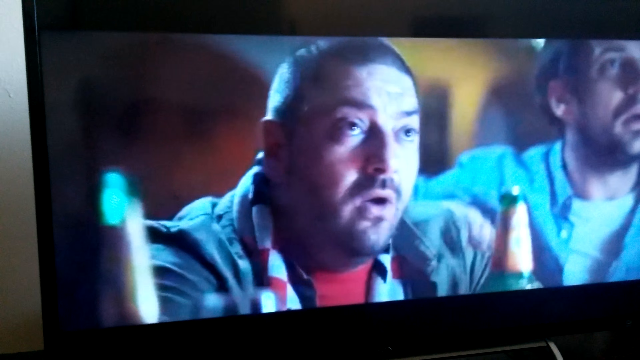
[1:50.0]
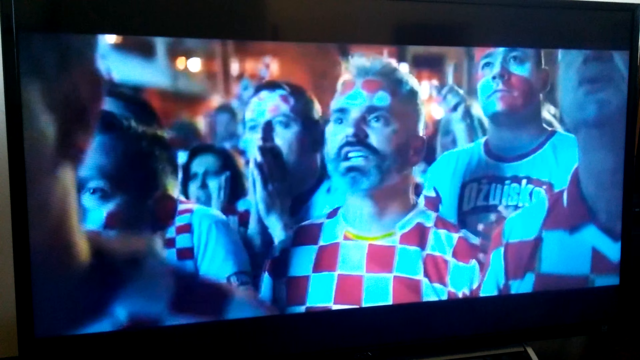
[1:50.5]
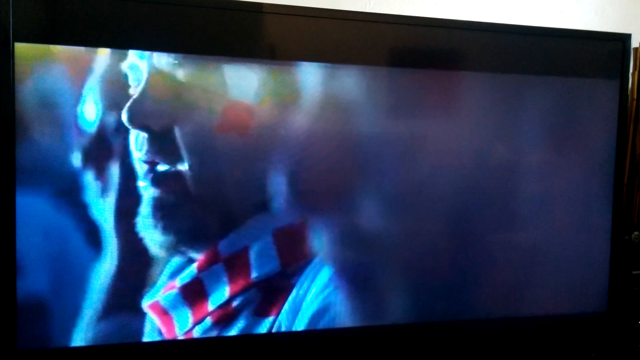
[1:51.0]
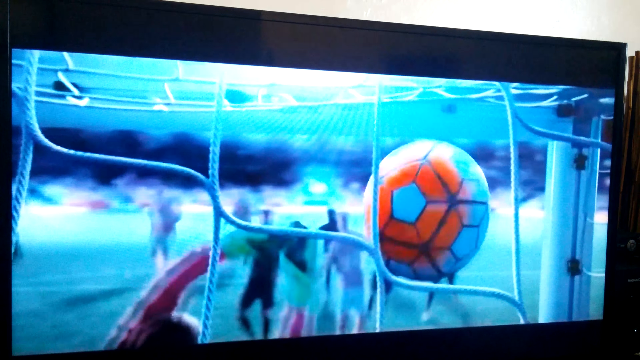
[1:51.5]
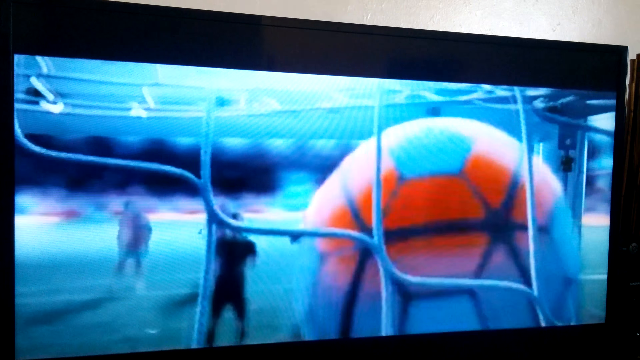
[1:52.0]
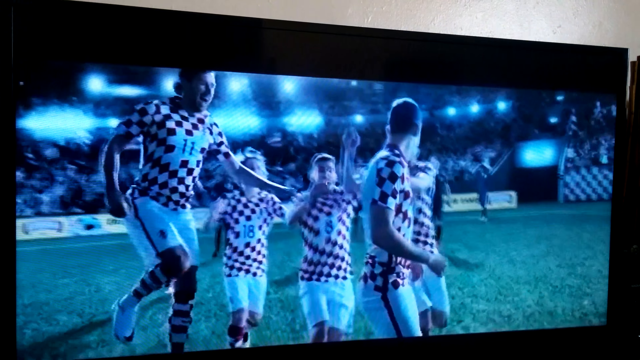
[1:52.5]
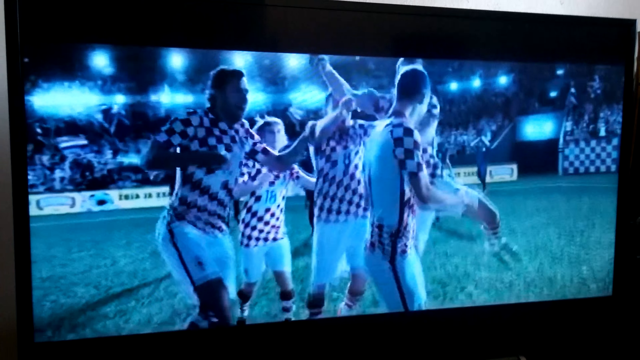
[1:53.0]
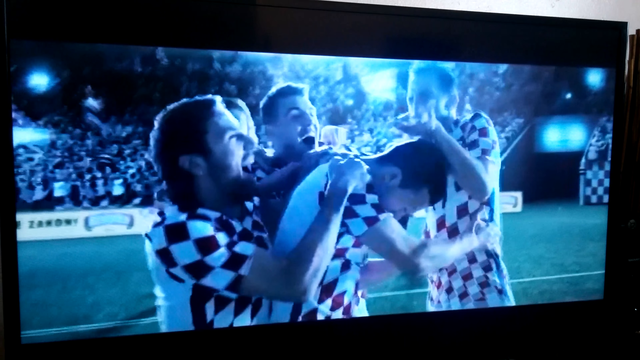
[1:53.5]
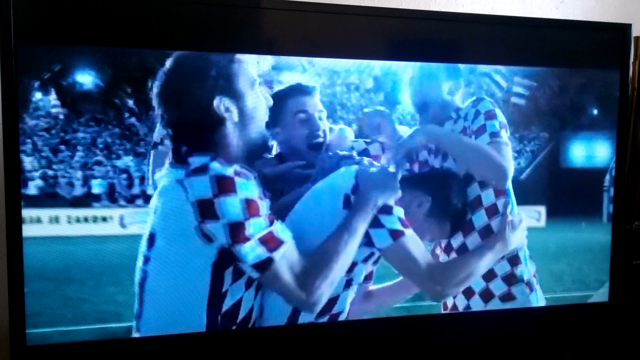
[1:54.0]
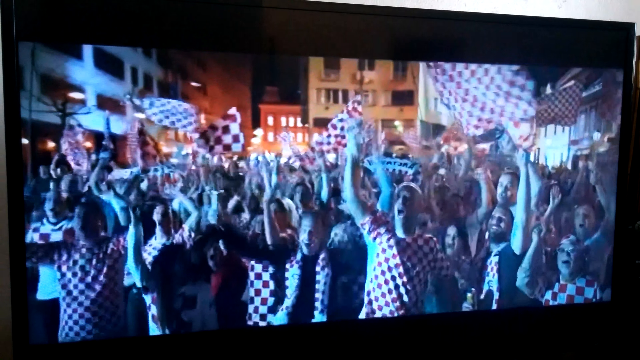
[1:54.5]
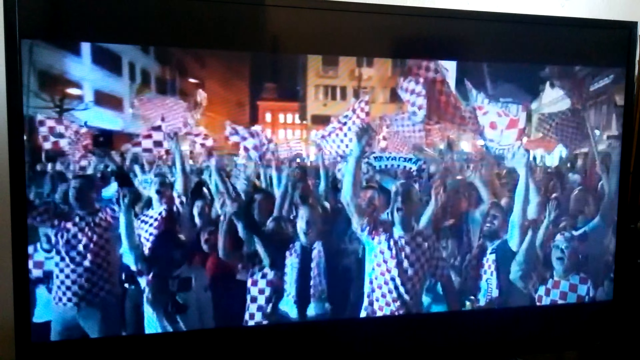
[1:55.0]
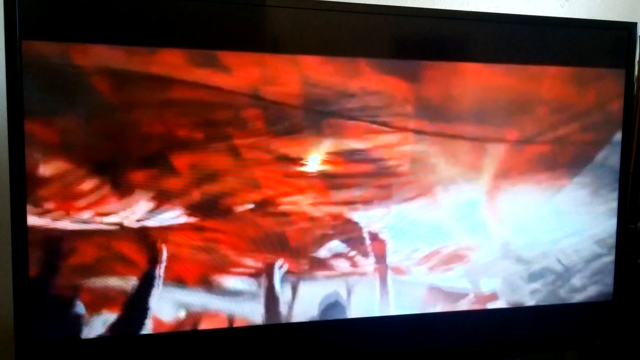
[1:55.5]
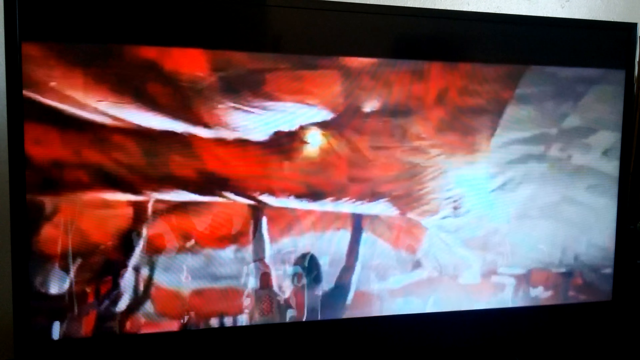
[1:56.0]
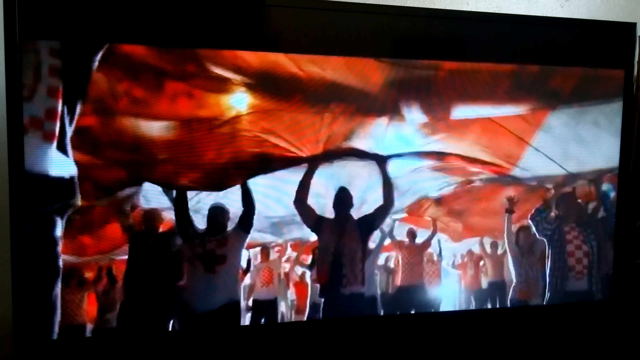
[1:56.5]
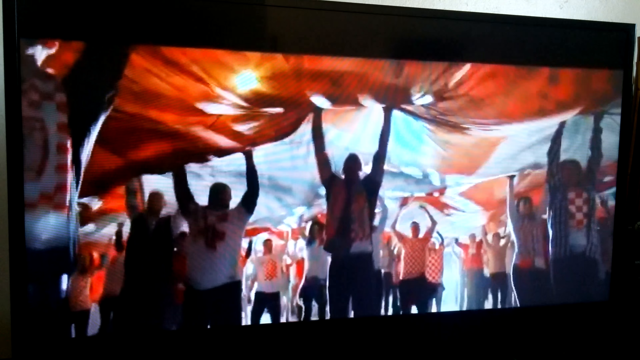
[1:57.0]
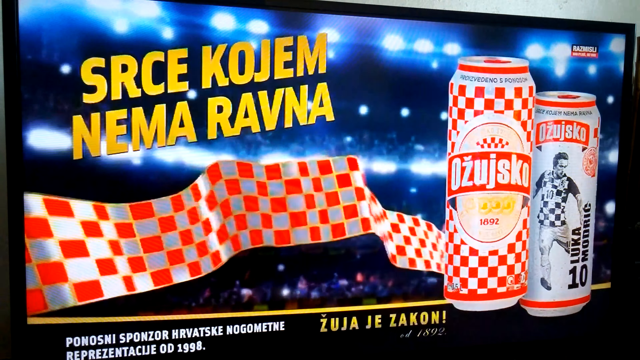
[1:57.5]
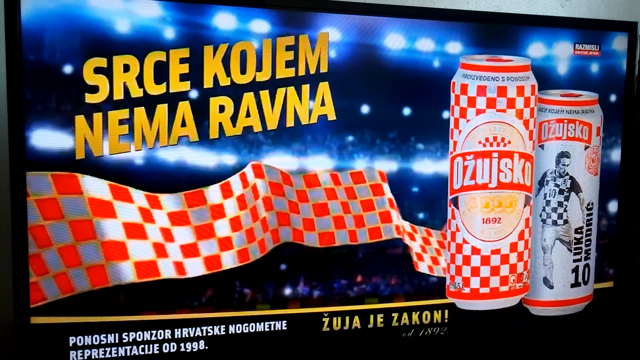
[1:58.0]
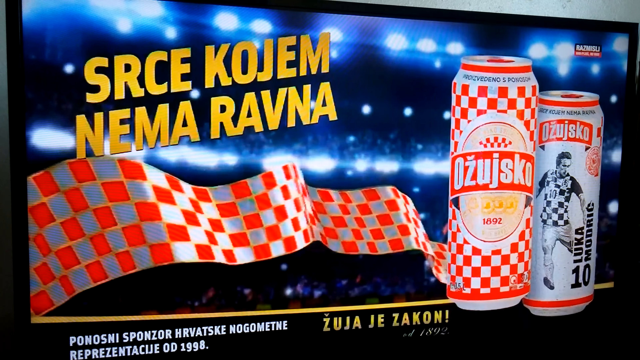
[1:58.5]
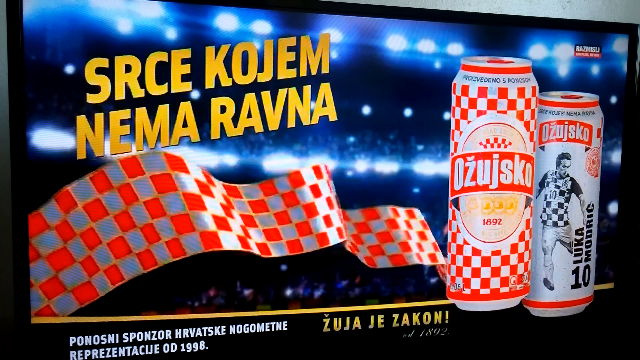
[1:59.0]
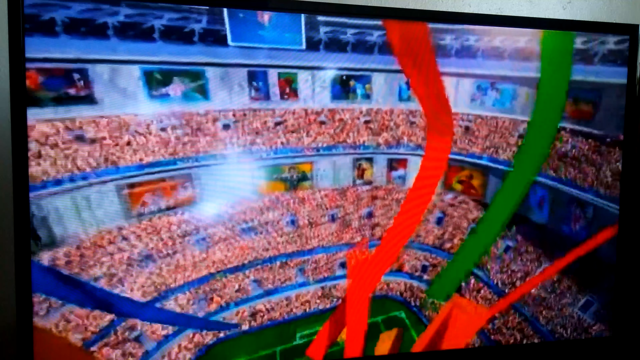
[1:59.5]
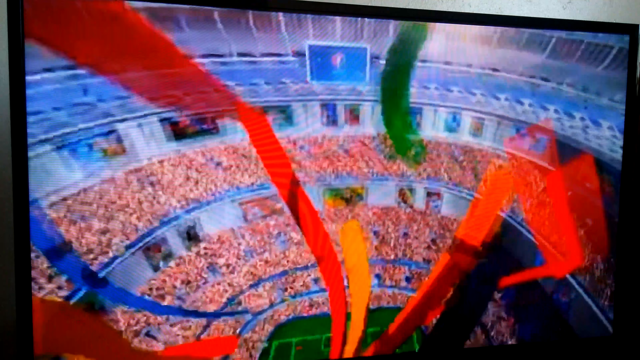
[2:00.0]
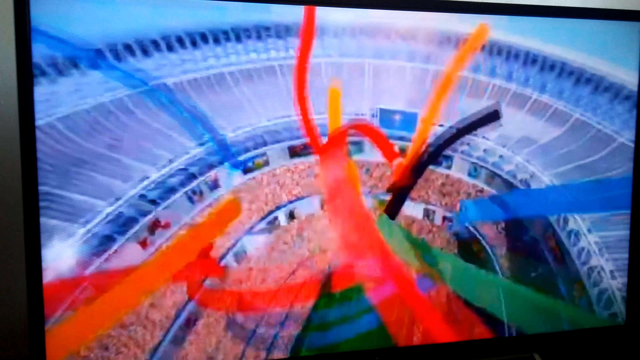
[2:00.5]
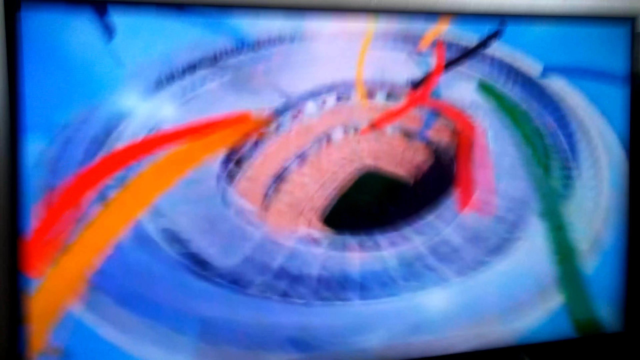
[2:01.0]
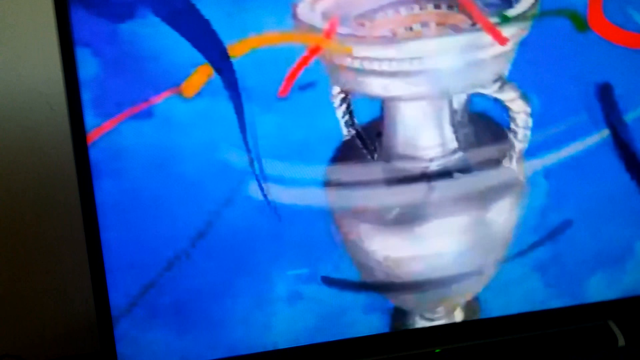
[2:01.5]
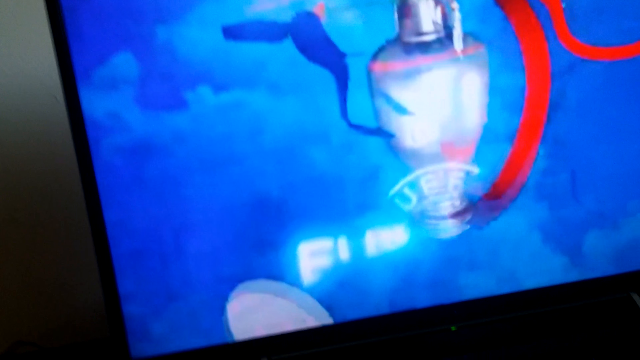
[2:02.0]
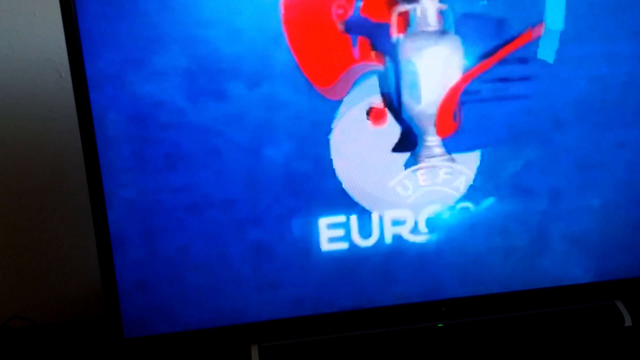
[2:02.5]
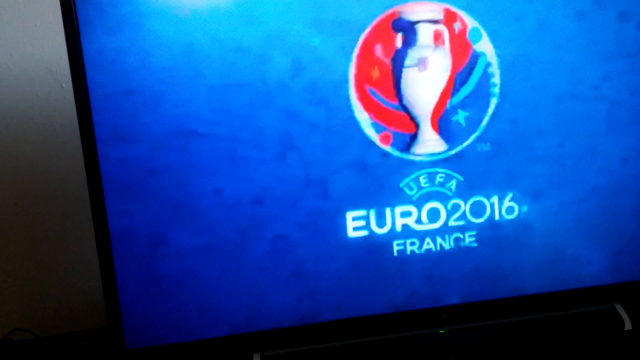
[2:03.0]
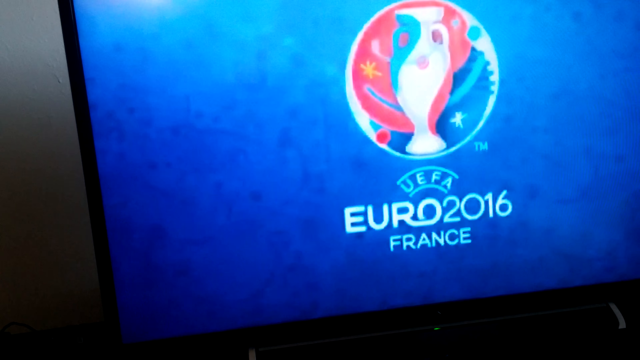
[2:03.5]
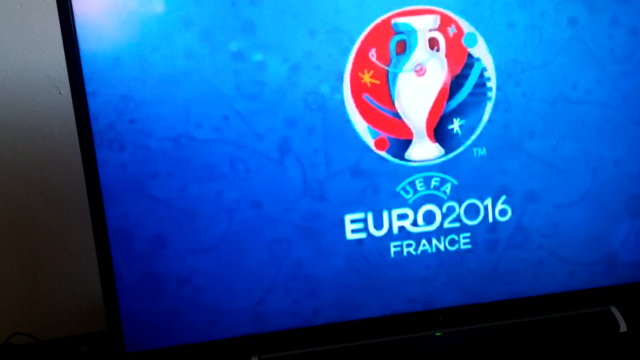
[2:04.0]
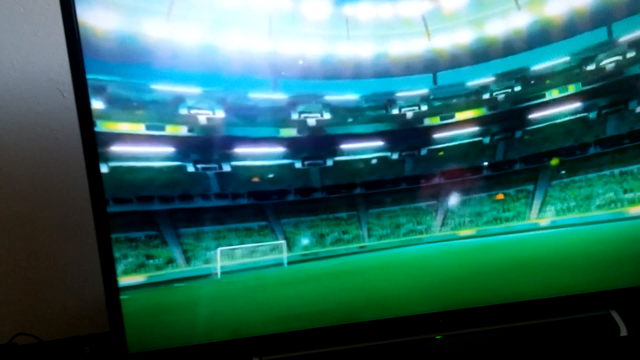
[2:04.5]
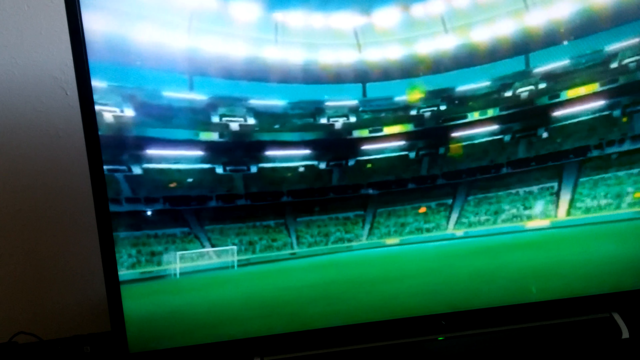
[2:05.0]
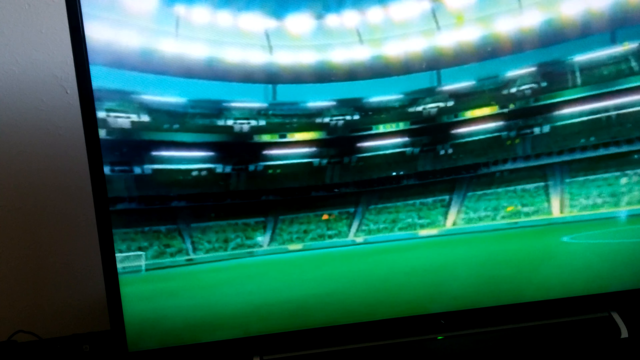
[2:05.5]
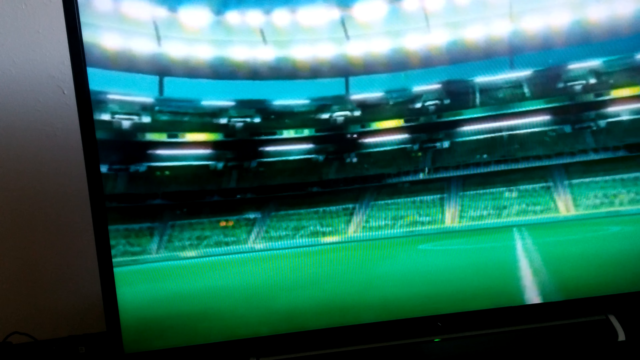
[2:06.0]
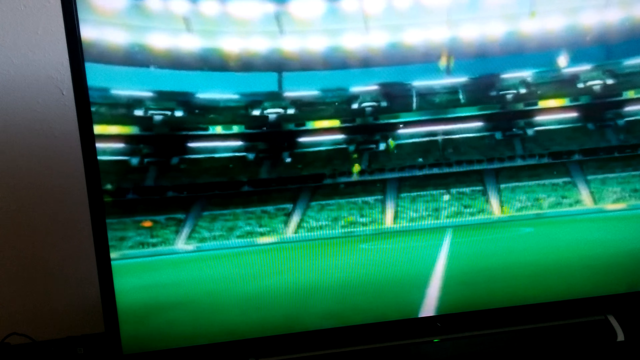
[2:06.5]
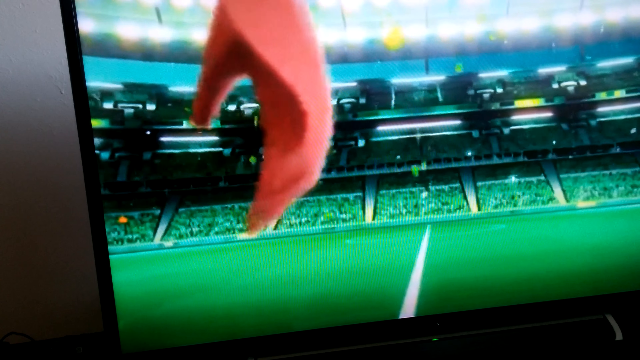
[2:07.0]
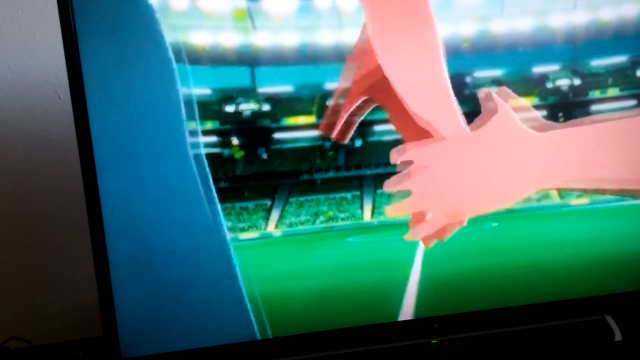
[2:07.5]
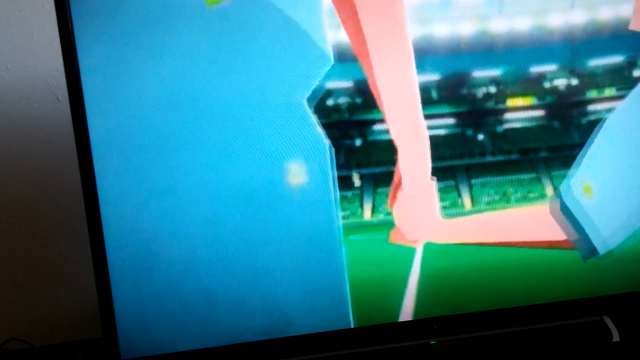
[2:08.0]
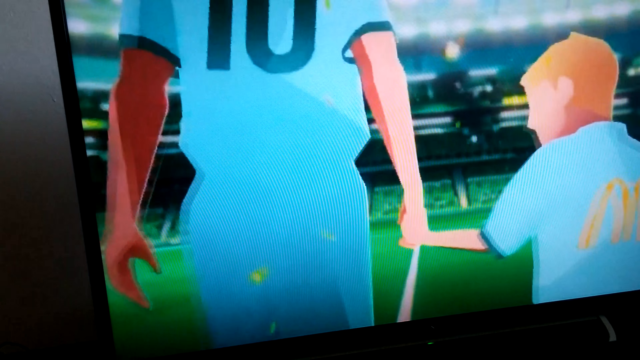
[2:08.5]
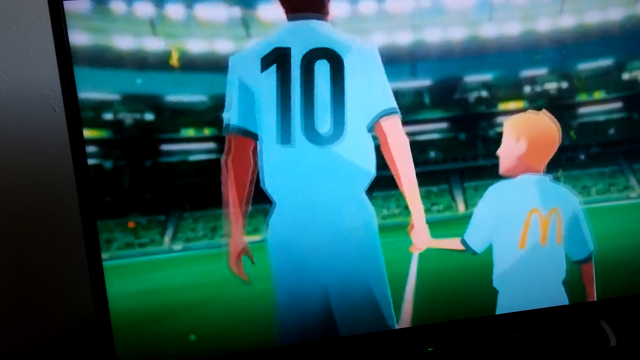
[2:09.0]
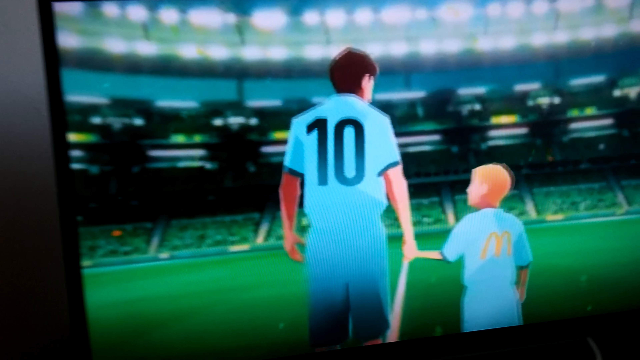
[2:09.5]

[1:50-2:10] A commercial shows some people watching a soccer game; a camera is focused on a television playing the commercial. Some people look anxiously at a game where someone scores a goal, and the ball goes through the net. The soccer players all jump up and down on the field, very excited. A large crowd of people on the street jump up and down excitedly, wearing the same uniform as the team that just scored. What appears to be a giant flag is shown with people underneath it, jumping up and down and pushing the flag up and down. It turns out to be a commercial for a beer called Ozujsko, spelled O-Z-U-J-S-K-O. The beer can has a checkered design on one side; on the other side there appears to be a soccer player named Luka Modric, number 10, on the front of the can. The scene shifts to a computer-graphic stadium with lots of different colored lines of confetti shooting out of it. The camera zooms away from the stadium to reveal that it is inside a huge trophy. The trophy appears on the screen as a logo, with "UEFA Euro 2016 France" underneath. The view zooms out to a computer-graphic soccer field showing a man.